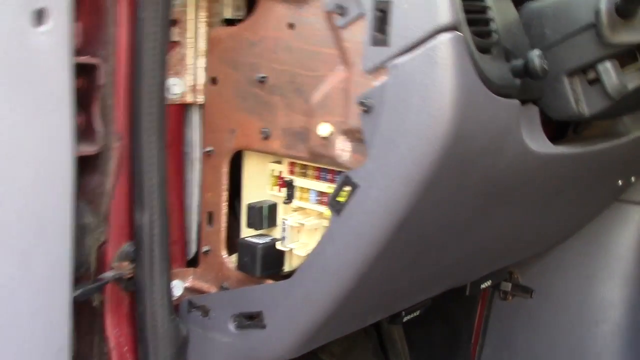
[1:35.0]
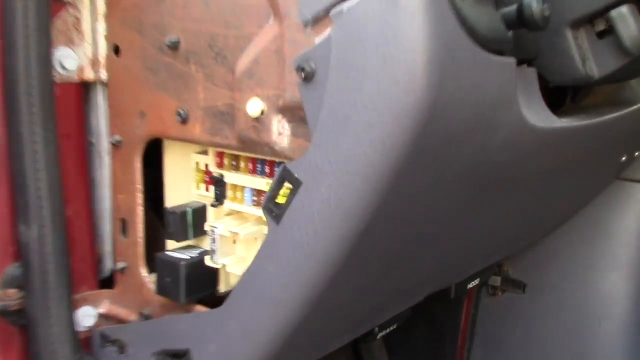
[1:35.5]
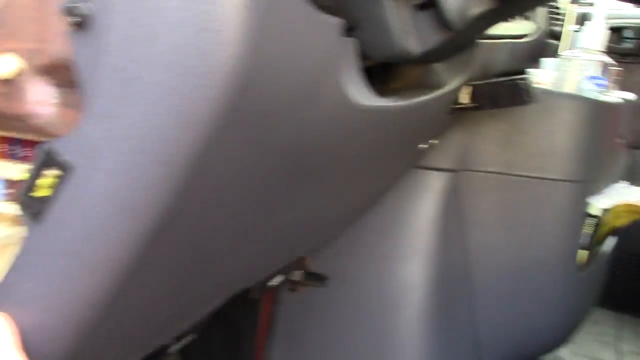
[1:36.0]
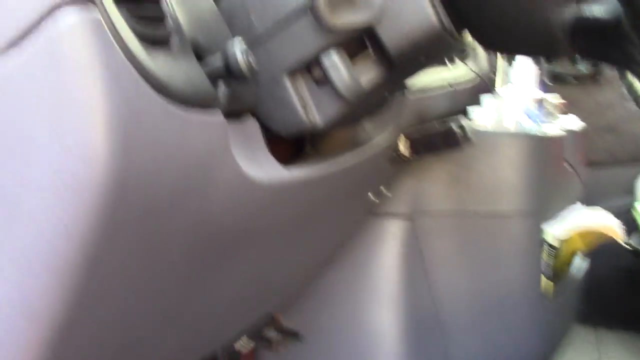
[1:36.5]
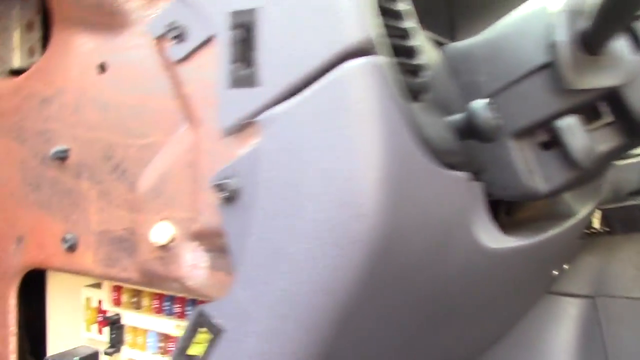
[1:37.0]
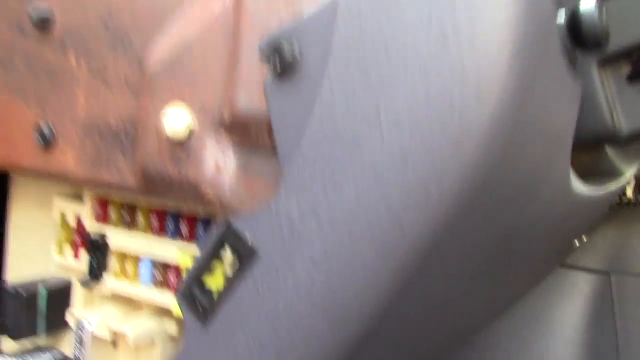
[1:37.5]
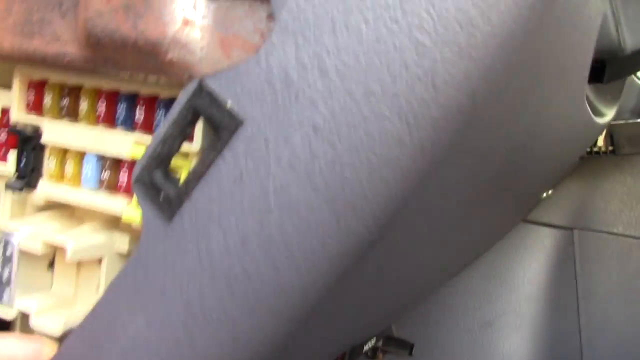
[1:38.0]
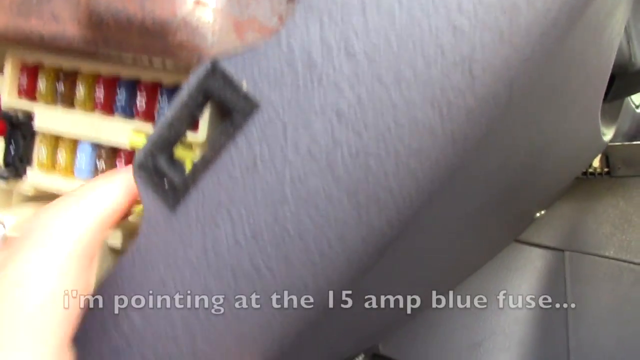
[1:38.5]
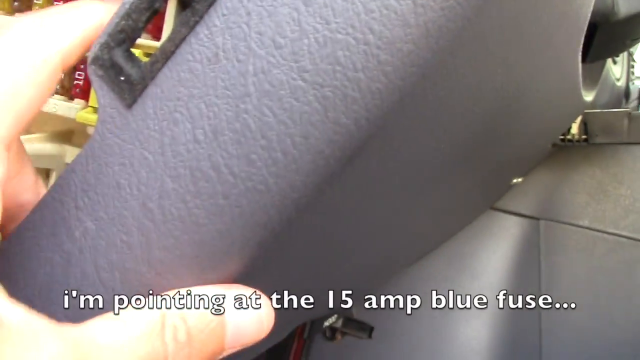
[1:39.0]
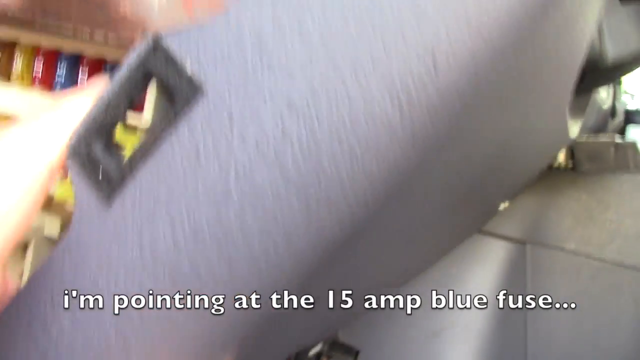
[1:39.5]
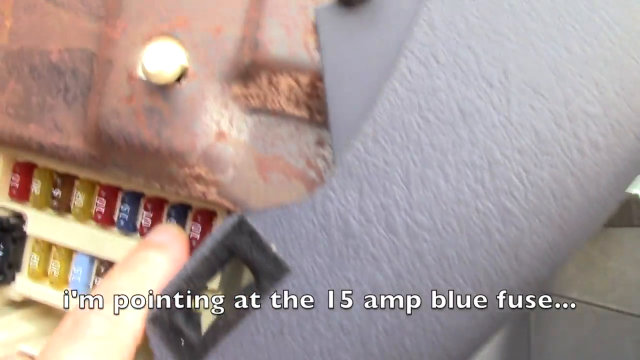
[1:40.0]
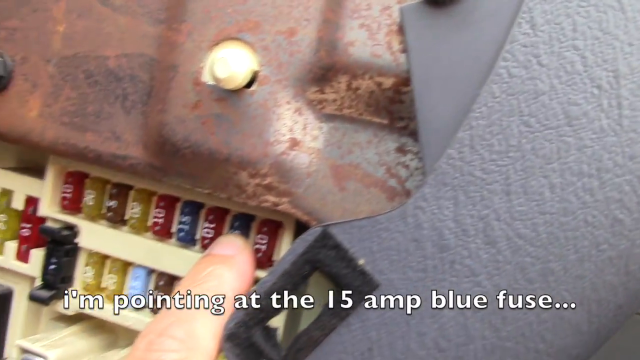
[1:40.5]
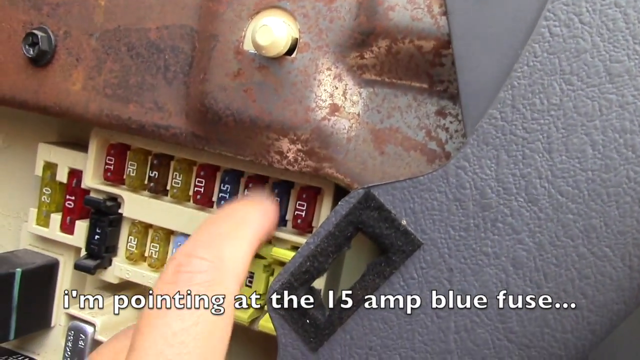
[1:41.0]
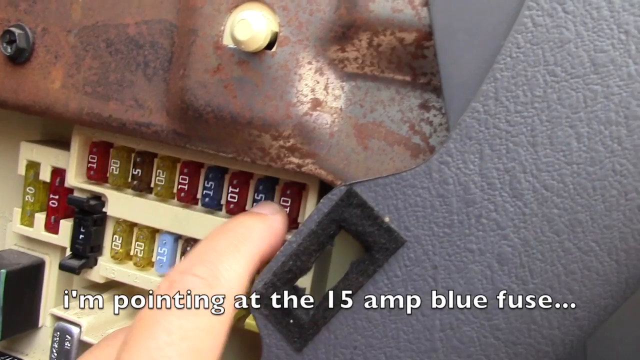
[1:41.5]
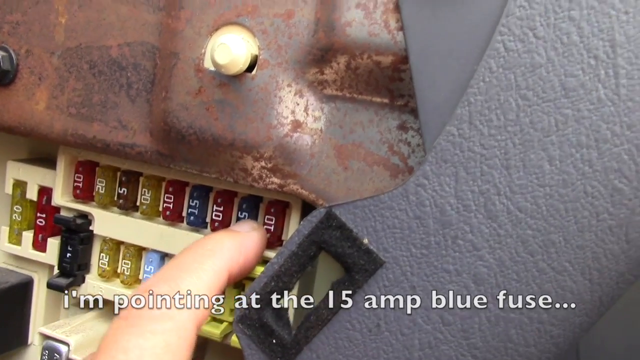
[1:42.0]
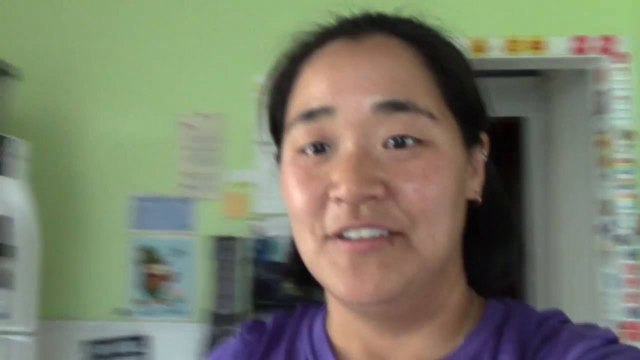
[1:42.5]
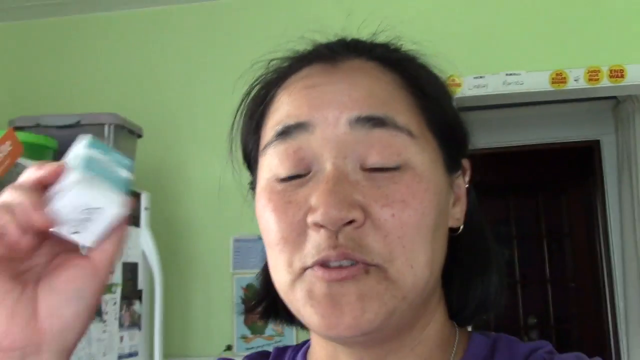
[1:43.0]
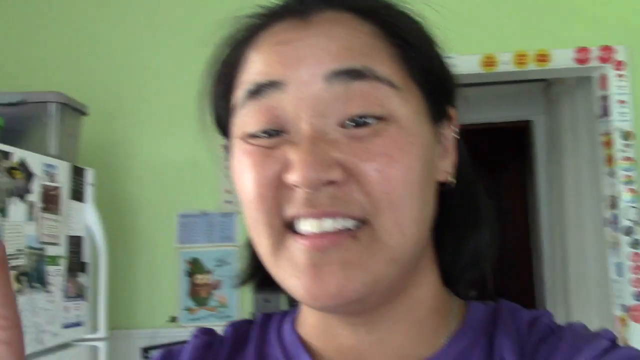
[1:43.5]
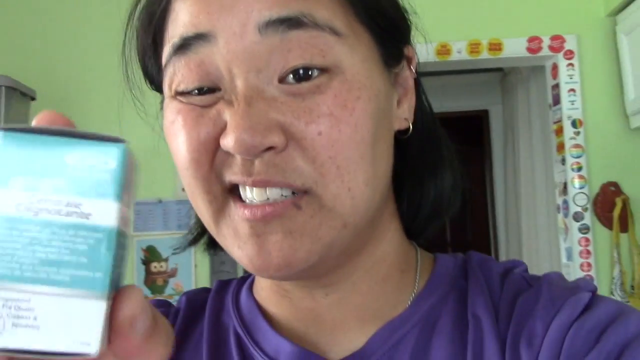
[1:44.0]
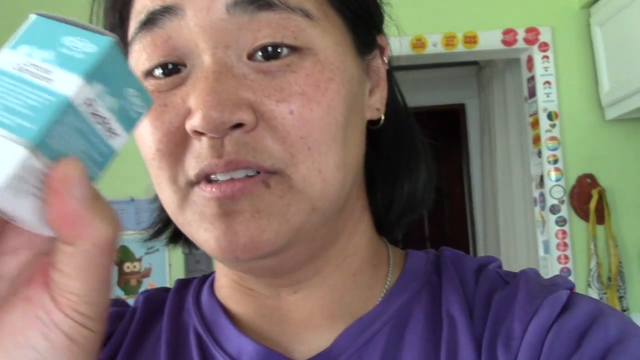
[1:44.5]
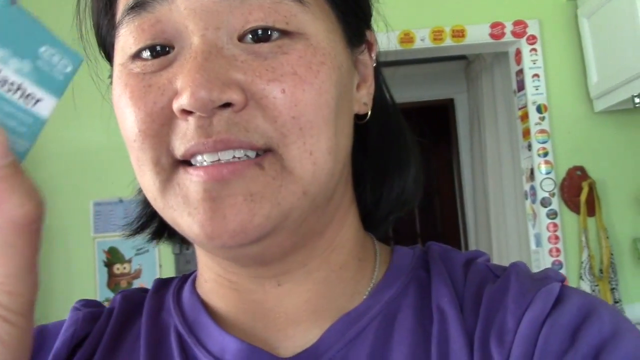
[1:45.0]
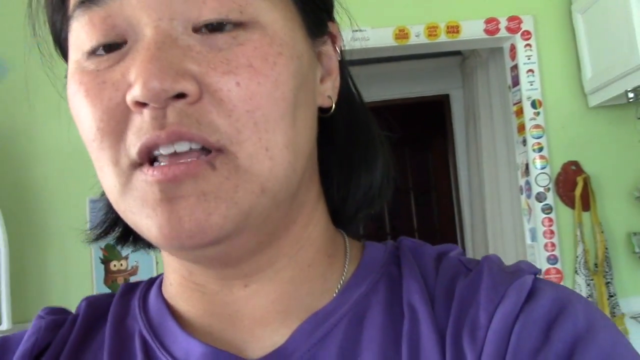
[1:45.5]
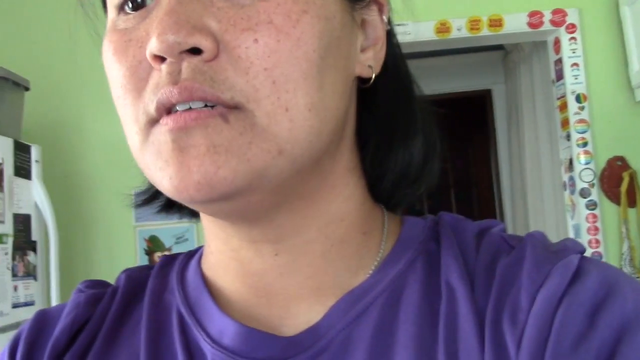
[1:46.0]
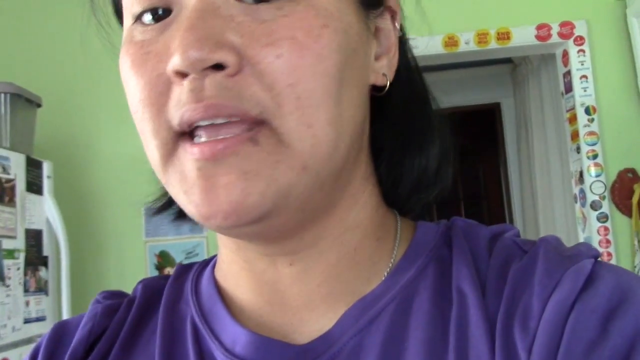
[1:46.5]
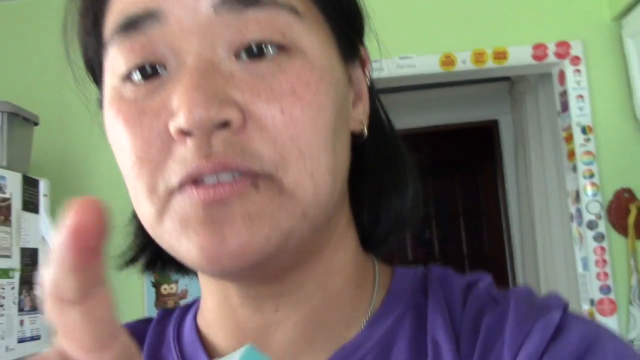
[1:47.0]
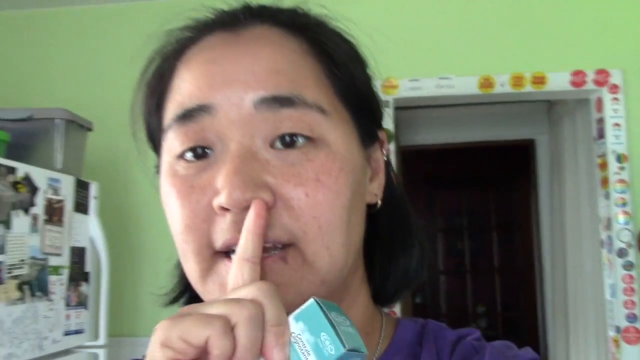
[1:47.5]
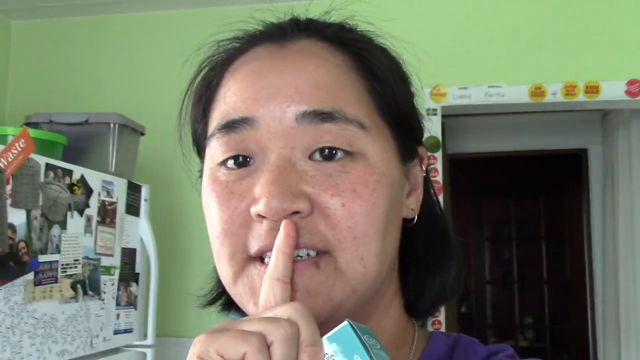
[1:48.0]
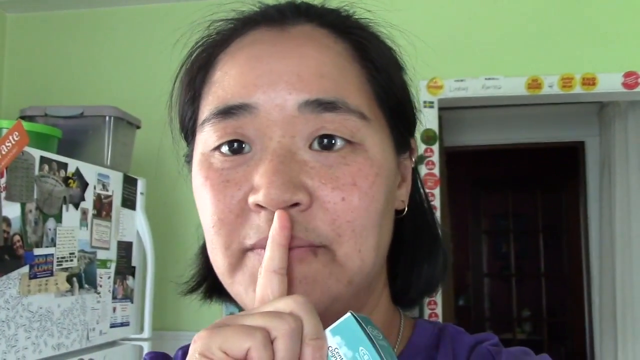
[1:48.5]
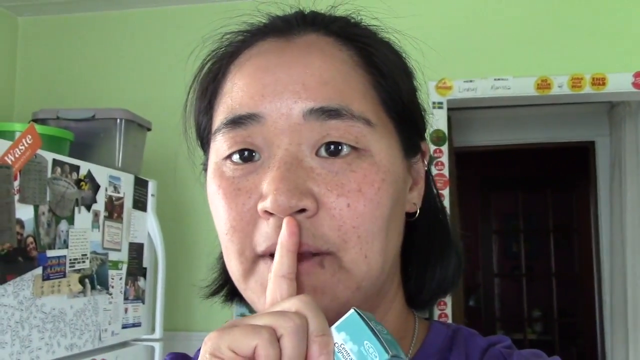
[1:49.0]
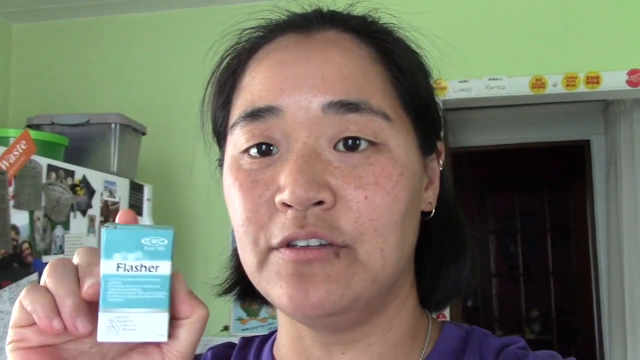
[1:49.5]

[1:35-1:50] The camera gets a little shaky. A left hand points at the colored buttons on the panel, and text appears reading "I'm pointing at the 15 amp blue fuse". The camera follows her finger as she points at the 15 amp blue fuse, taps it a few times and removes her hand. The video then returns to the talking-head shot in the kitchen, where she holds the blue box and seems to be making a point. She puts her finger over her lips in what seems to be a thinking gesture.